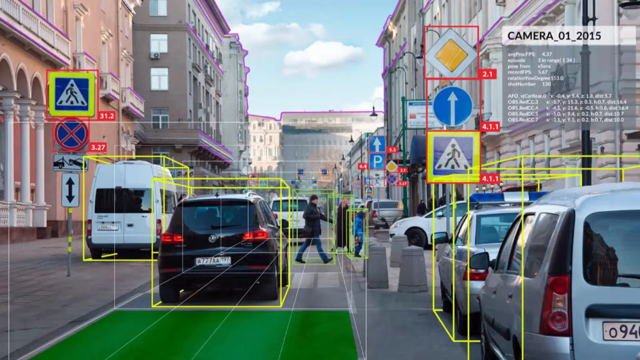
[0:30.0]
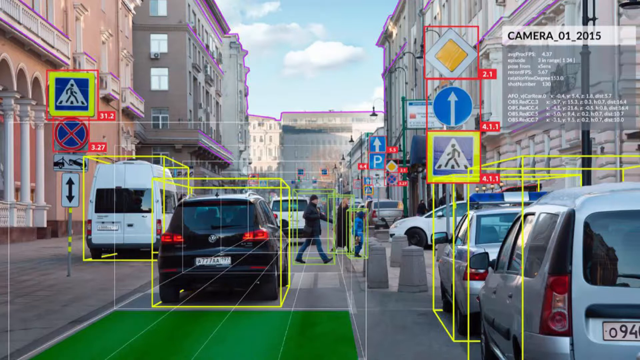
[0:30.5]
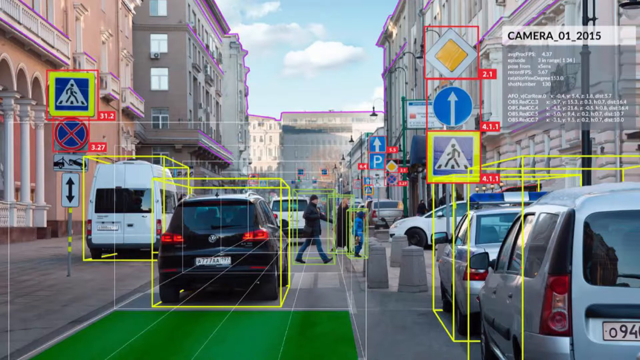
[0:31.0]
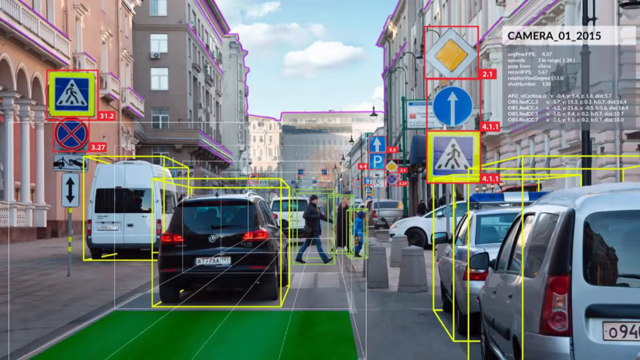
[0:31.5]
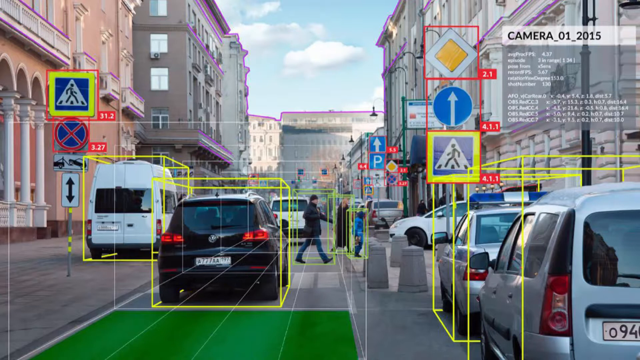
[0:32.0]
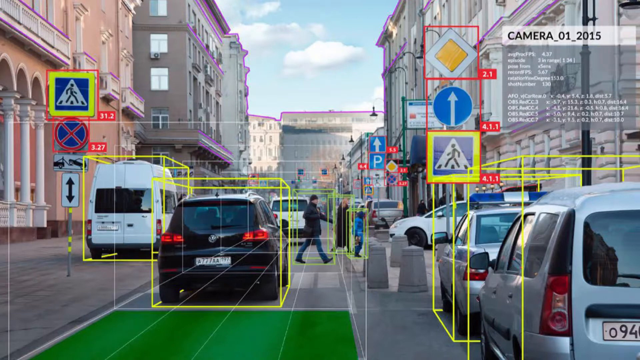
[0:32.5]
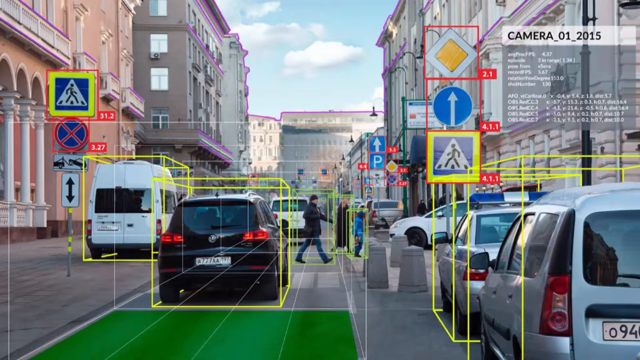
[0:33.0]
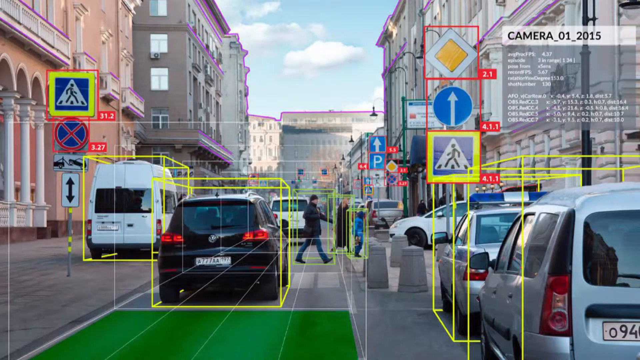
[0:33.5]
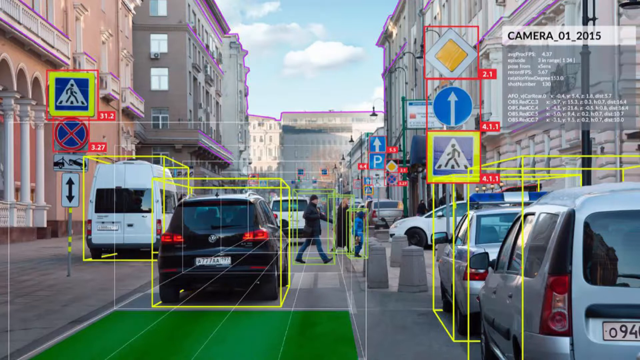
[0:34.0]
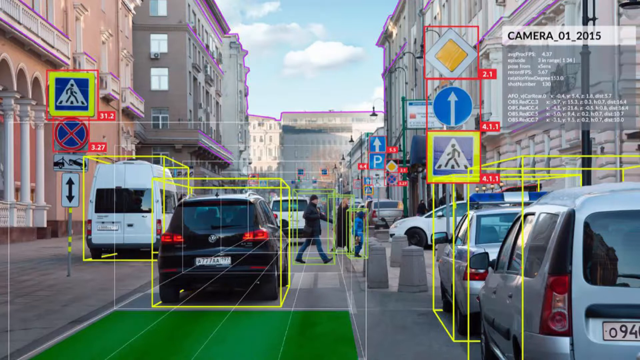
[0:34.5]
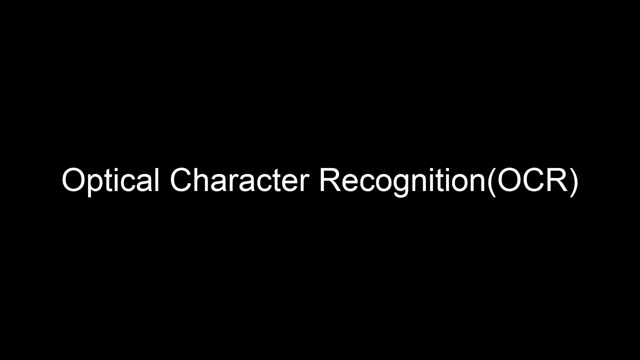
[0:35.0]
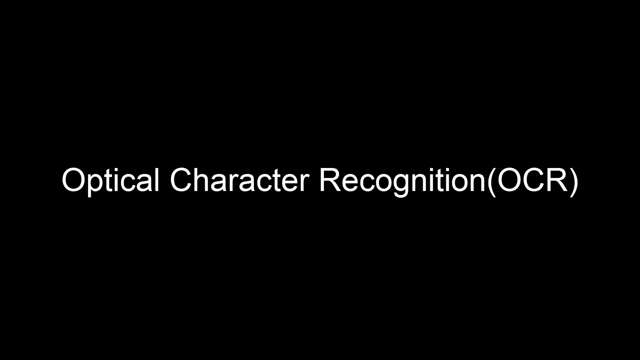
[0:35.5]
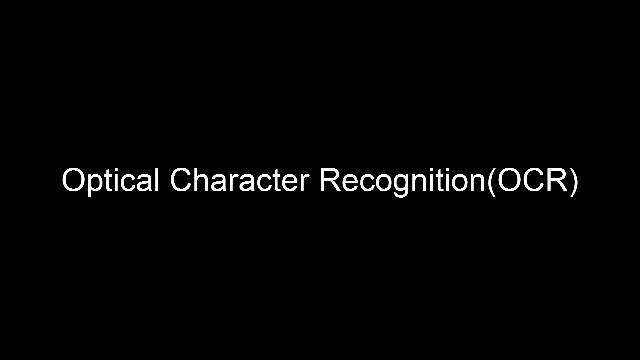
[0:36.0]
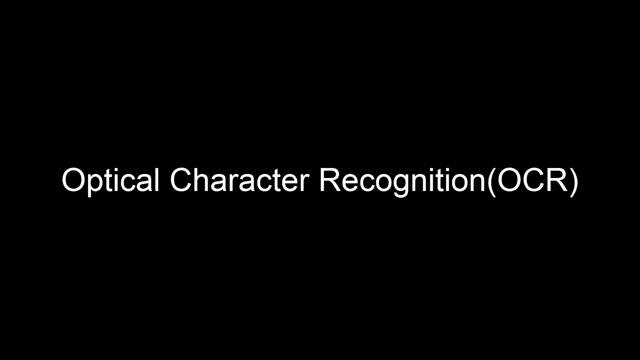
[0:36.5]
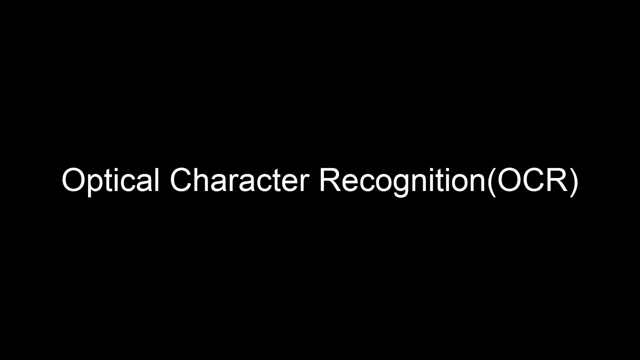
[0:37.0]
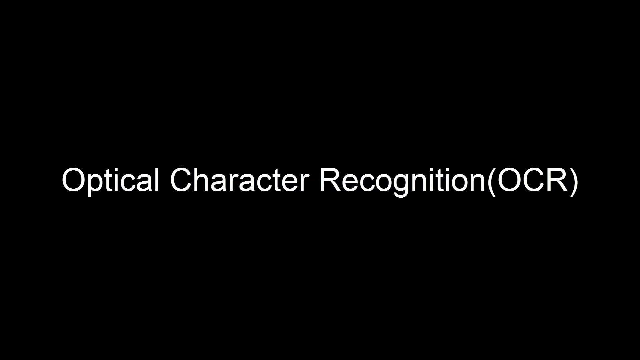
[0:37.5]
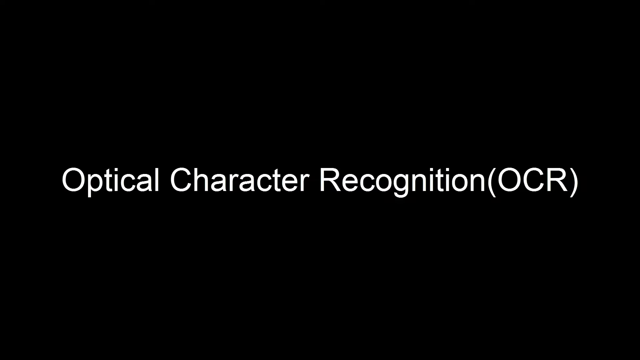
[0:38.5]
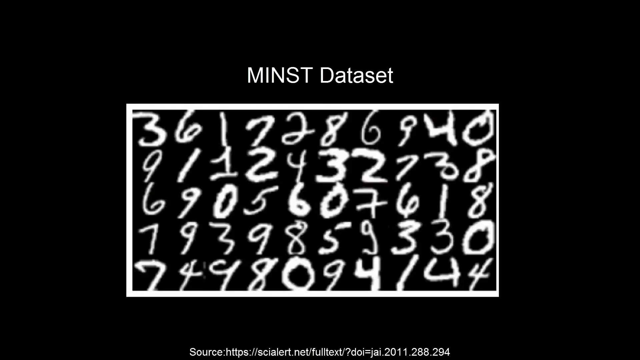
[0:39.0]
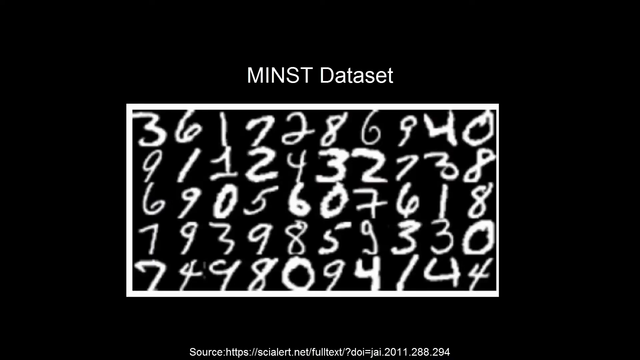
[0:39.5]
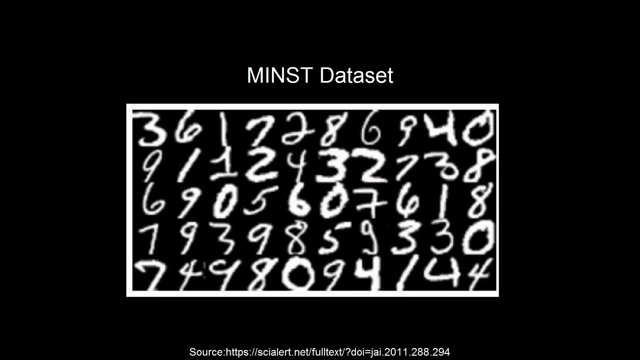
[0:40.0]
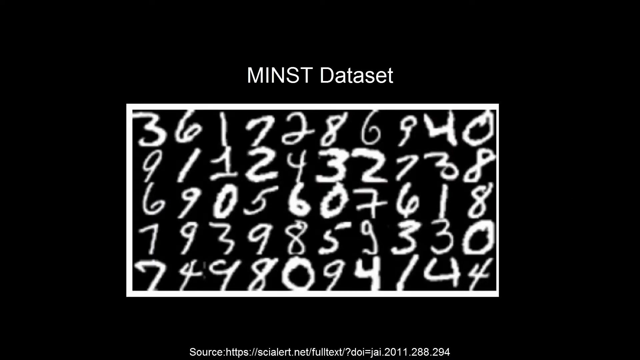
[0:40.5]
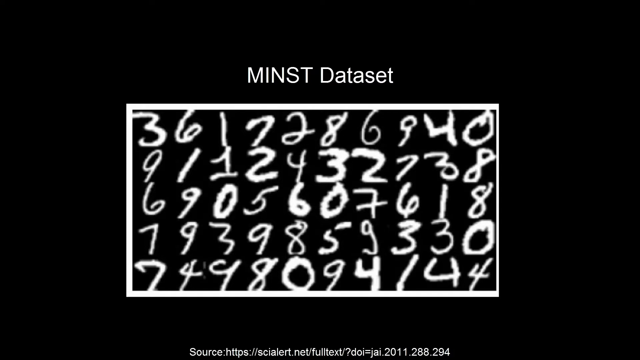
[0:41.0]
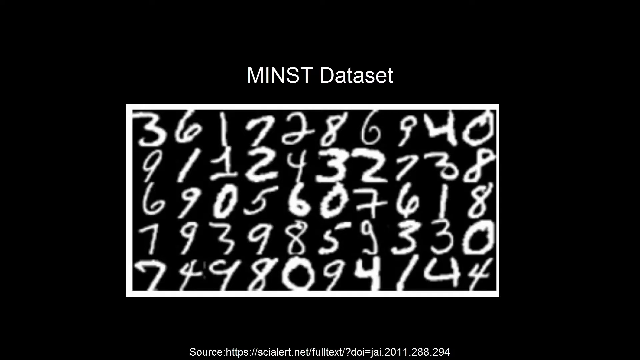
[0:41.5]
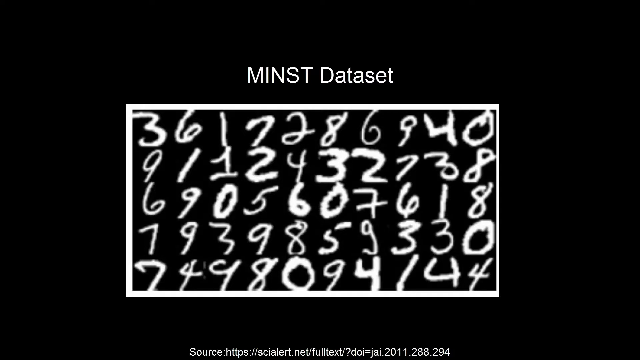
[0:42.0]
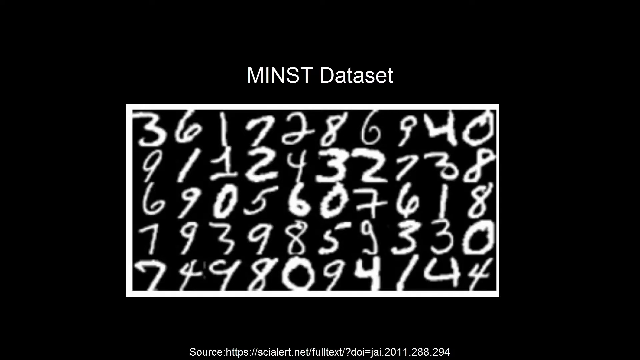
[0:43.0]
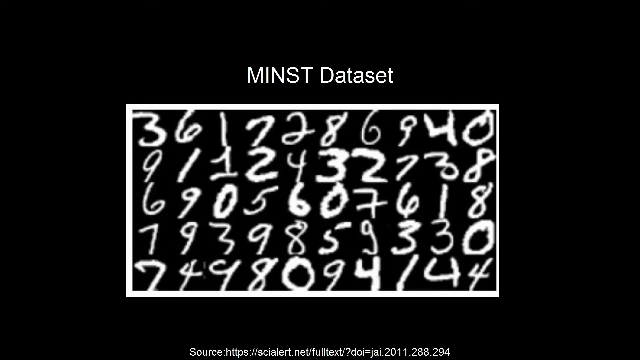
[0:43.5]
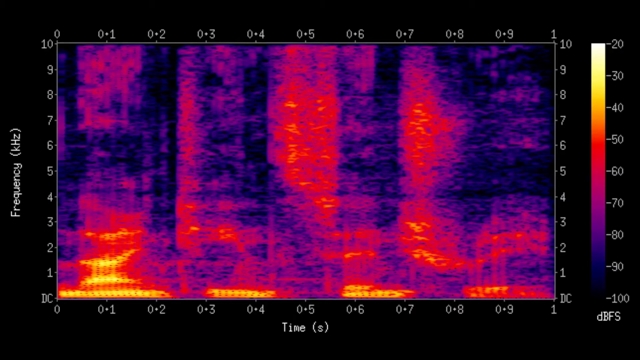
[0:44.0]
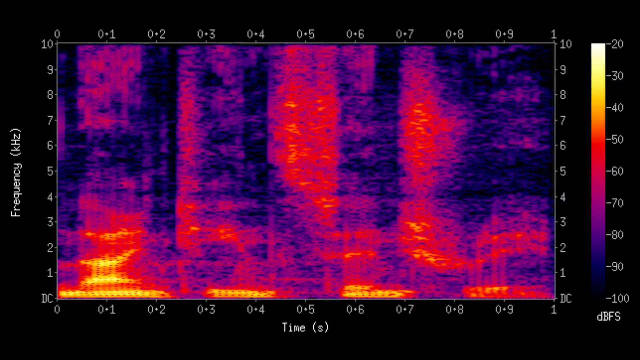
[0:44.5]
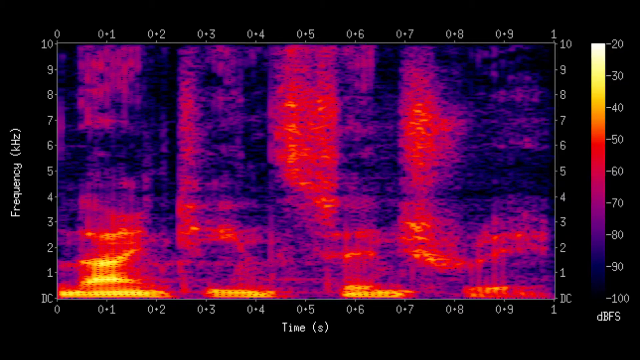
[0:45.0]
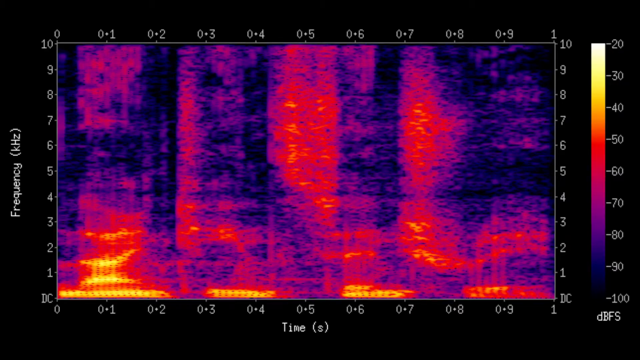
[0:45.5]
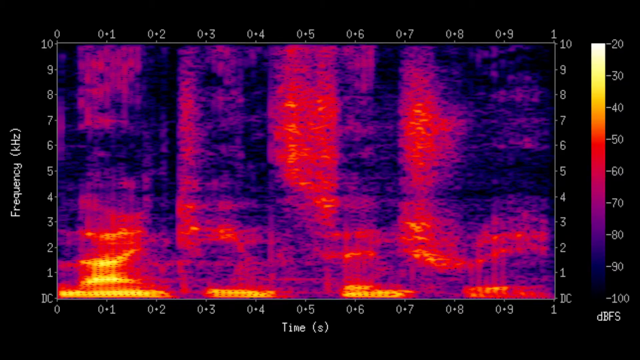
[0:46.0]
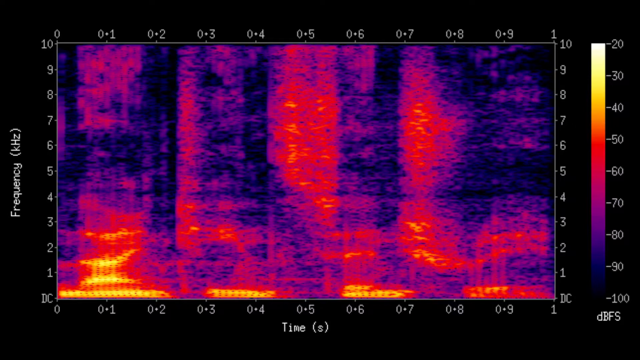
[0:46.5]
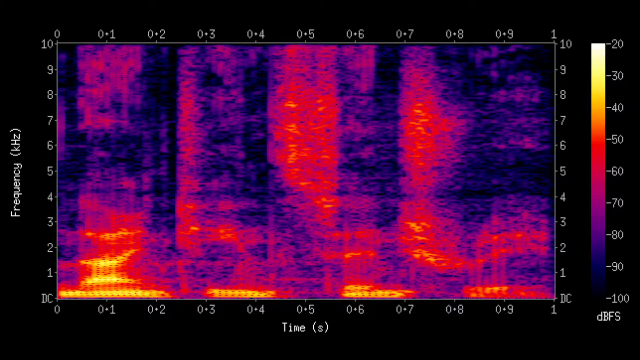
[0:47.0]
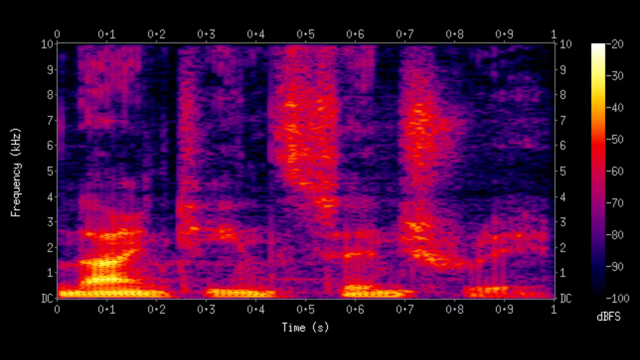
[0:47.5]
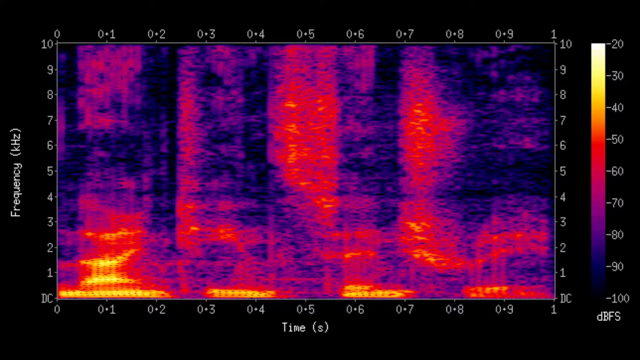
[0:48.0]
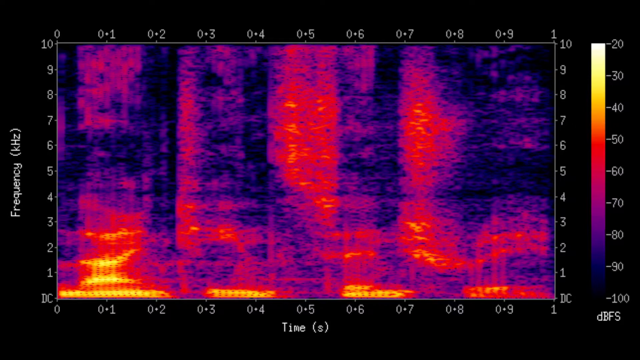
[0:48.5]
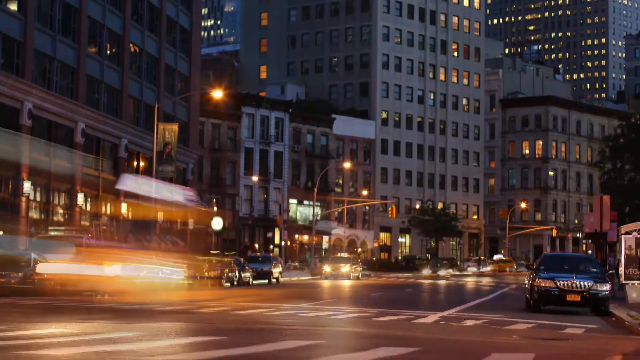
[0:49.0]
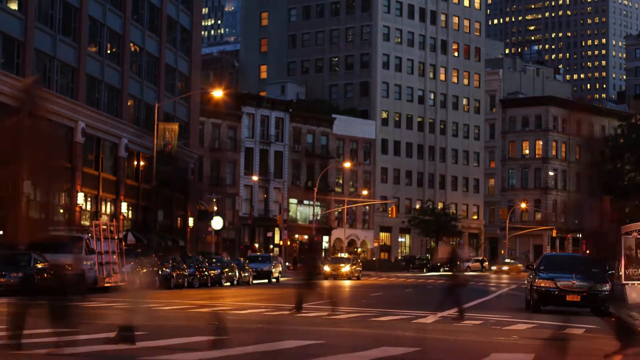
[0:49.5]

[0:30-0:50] A street view, which looks to be outside the USA, shows multiple cars on the left side. There is a black car with a white car in front of it, and to the front right of the black car is a white van. A person wearing a black beanie, a black sweater and long pants walks across the street. Animations surround each of the things in the scene: a yellow square box around the black car and each of the other vehicles, and a green box around the humans. On the top right it says "Camera 01-2015". The image is being analyzed. Then a black screen shows "optical character recognition, OCR" in white text, along with "MINST dataset".